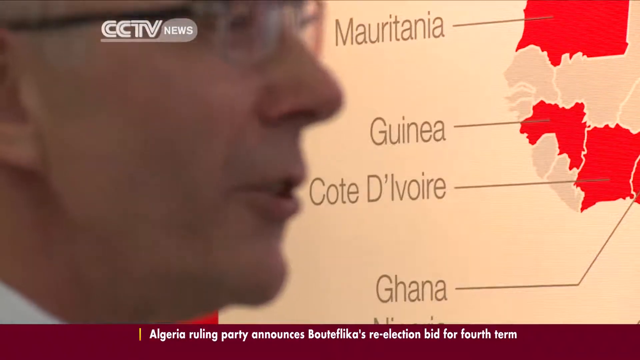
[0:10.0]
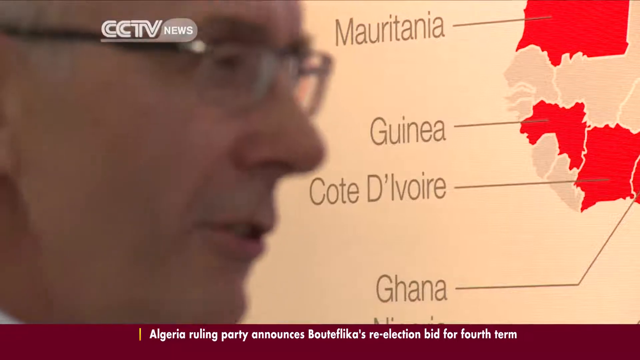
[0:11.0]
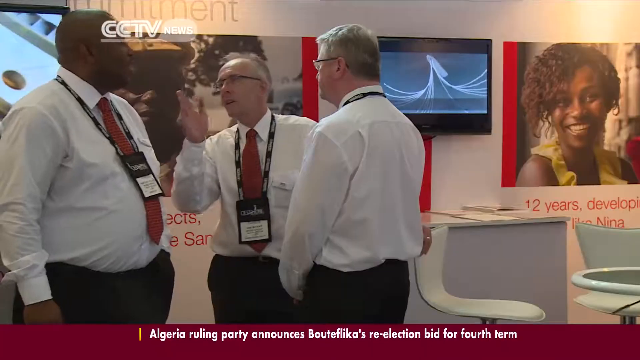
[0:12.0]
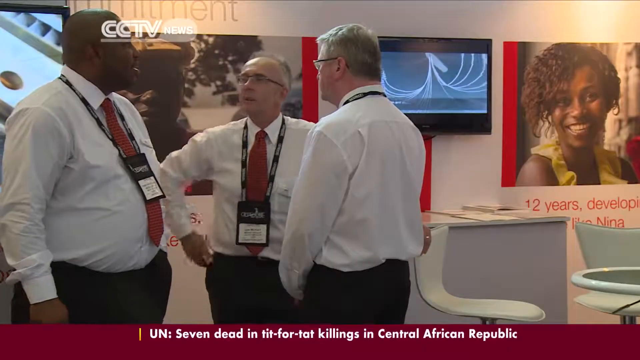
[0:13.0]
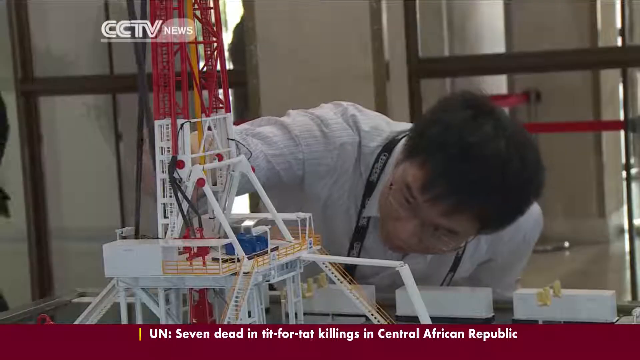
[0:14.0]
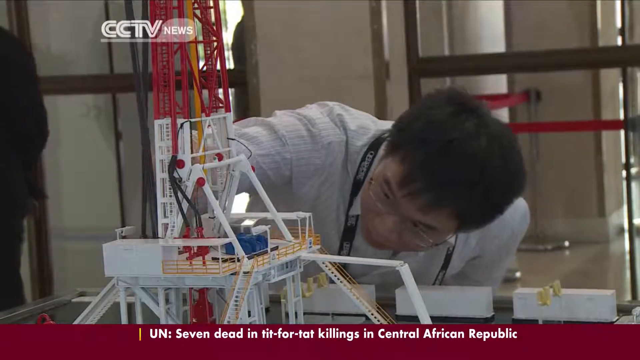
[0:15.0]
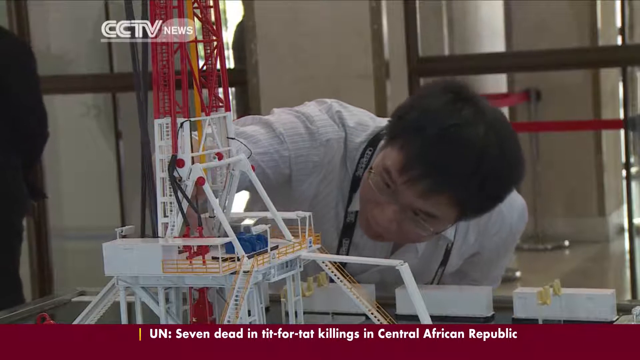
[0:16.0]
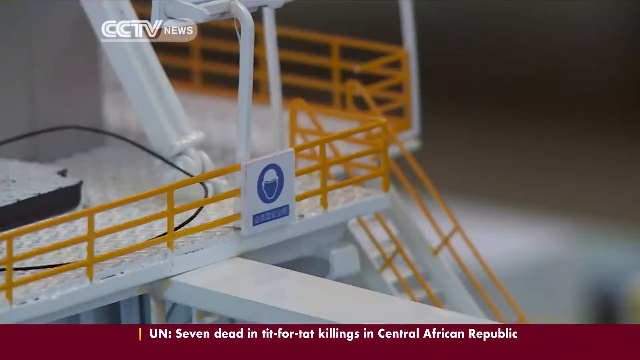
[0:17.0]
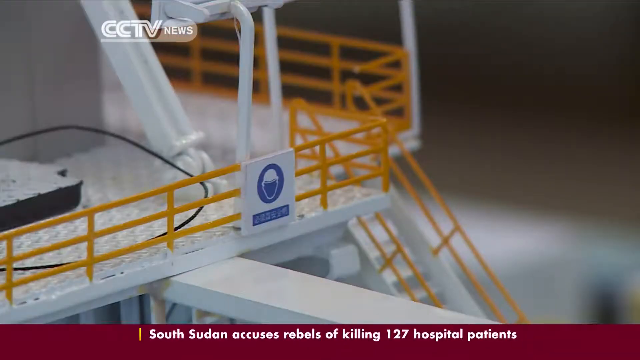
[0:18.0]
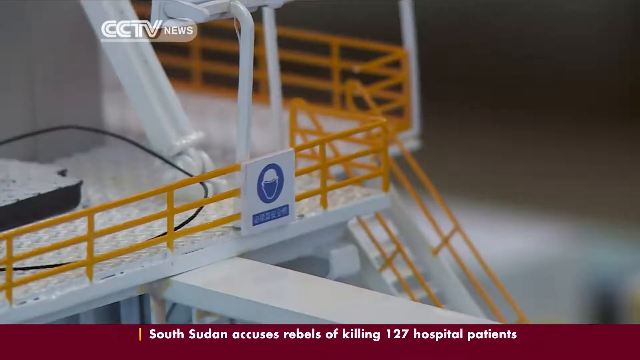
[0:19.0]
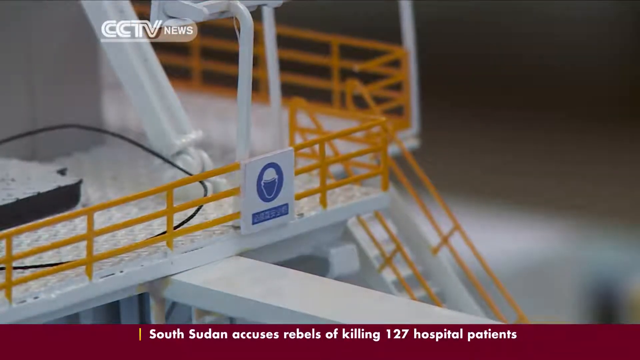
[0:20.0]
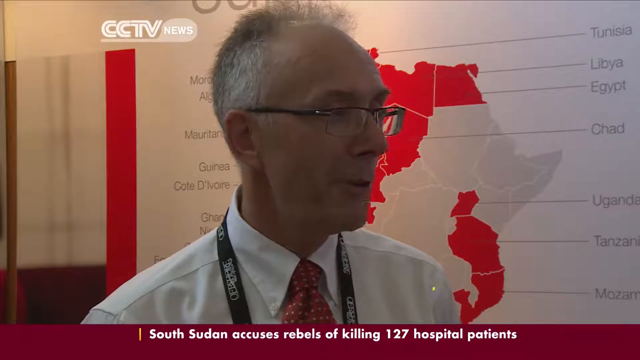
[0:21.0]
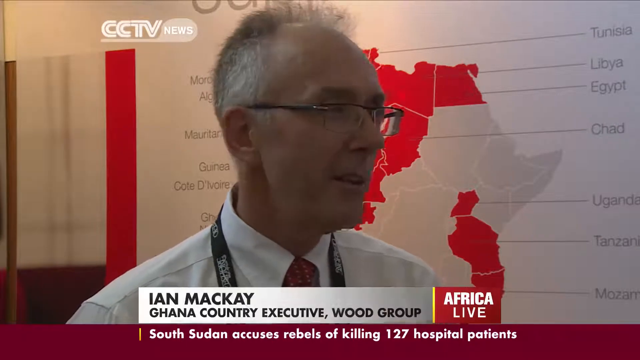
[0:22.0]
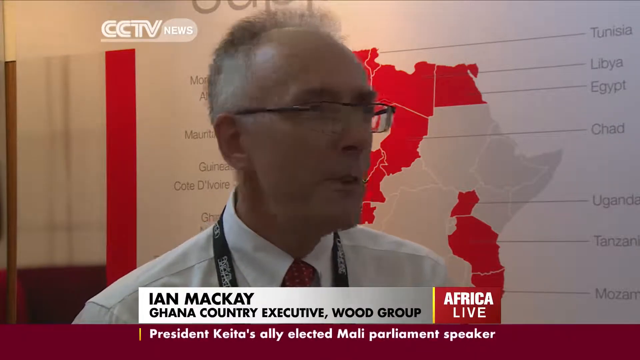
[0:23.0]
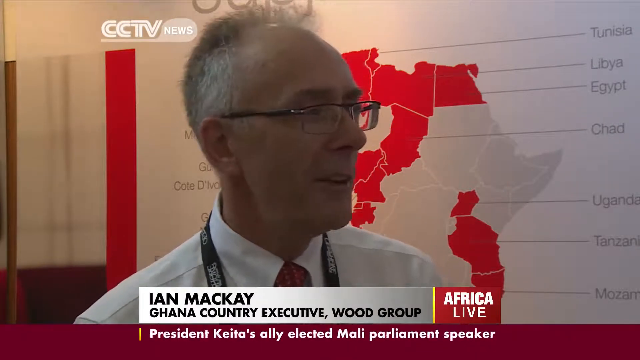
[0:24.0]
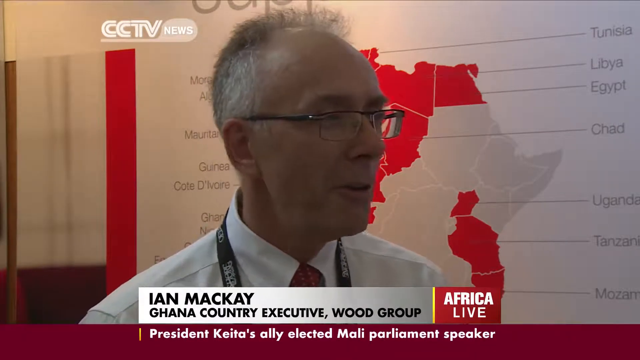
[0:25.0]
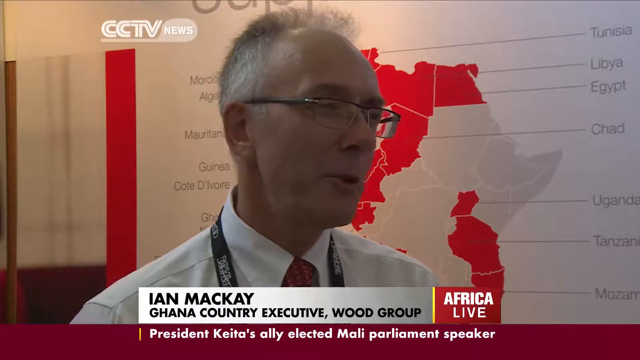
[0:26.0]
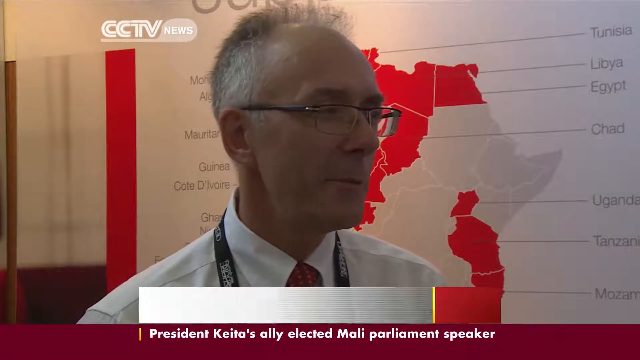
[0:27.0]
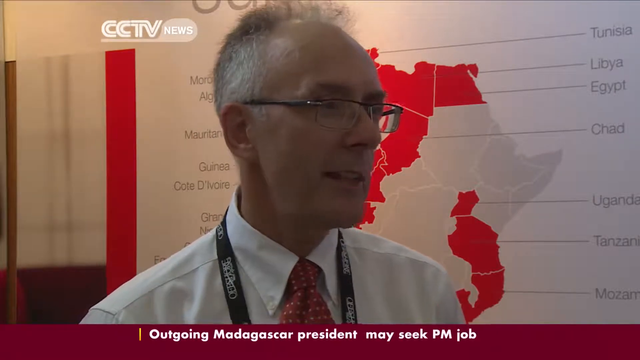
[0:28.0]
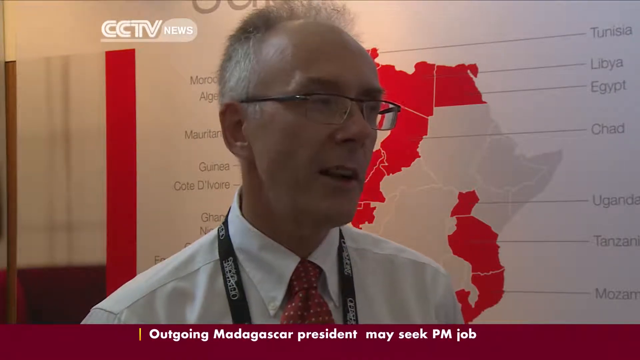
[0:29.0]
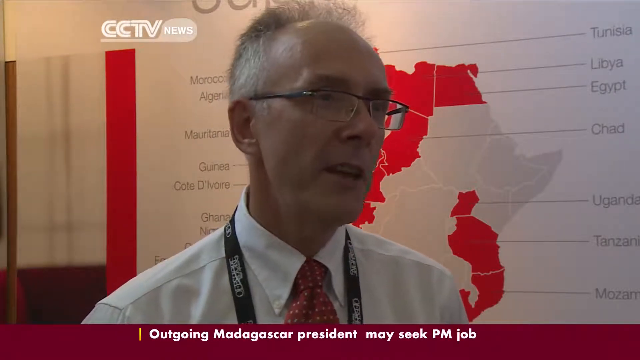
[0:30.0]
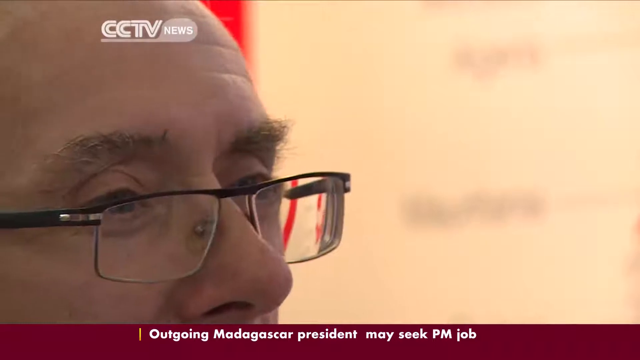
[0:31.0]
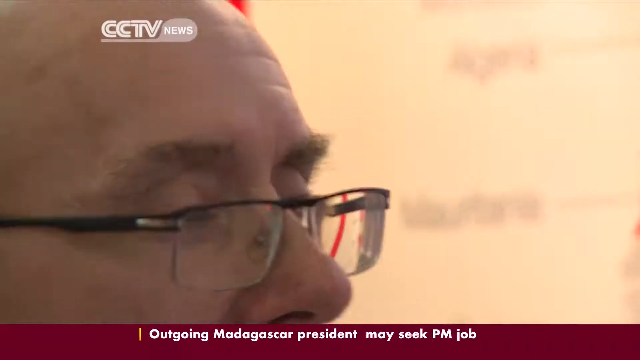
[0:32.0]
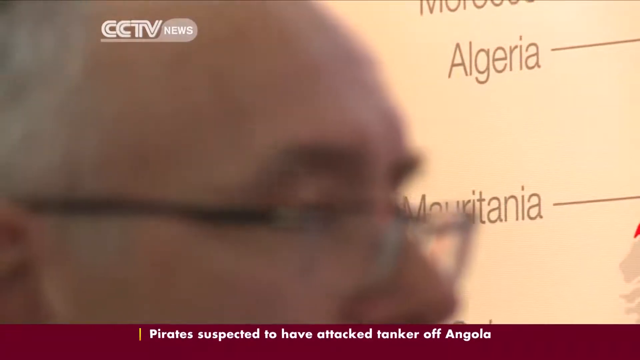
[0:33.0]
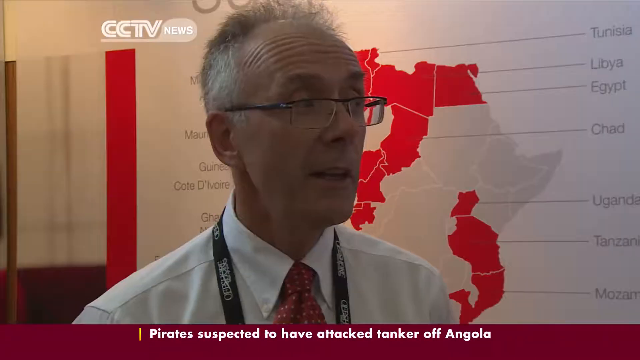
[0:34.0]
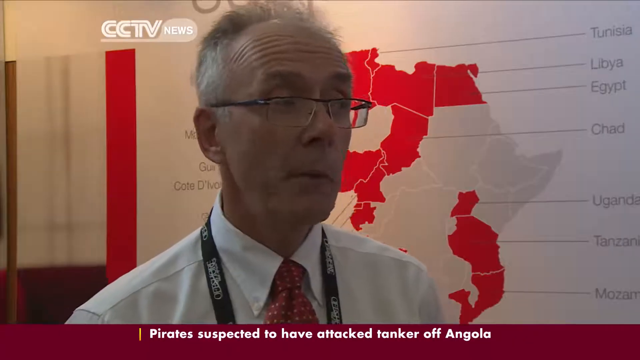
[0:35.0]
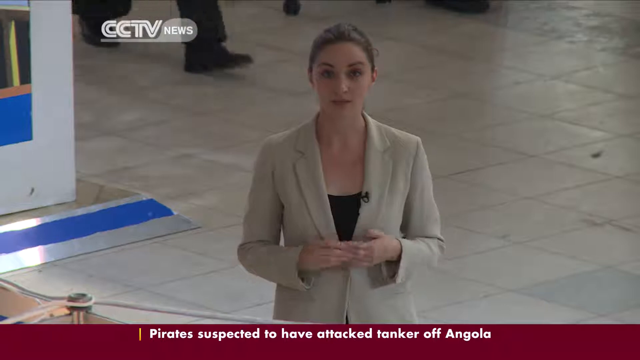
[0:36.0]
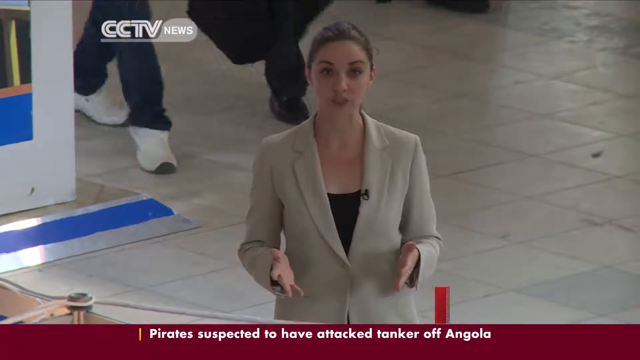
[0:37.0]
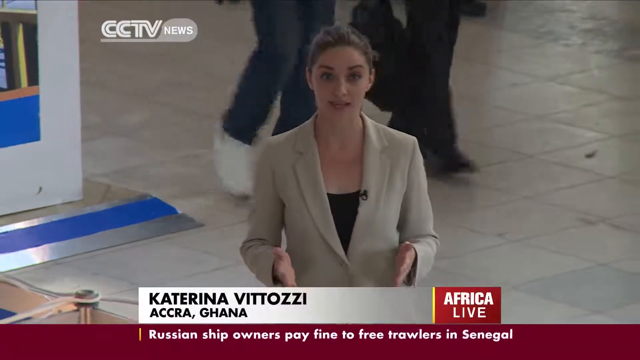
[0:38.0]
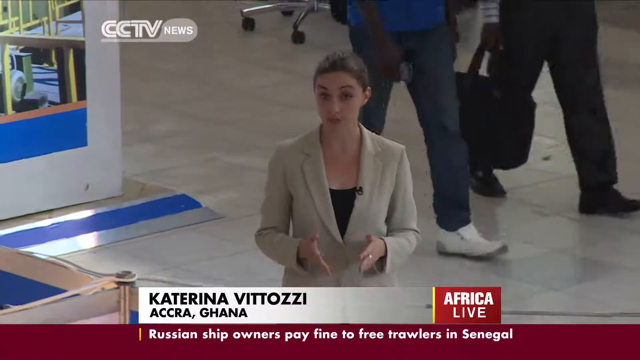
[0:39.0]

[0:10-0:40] The words "CCTV News" appear in the top left corner, naming the broadcasting channel. A heading reads "Welcome to offshore" in white writing on a grey background. At the bottom, the caption of the news report reads "18th annual West Africa offshore oil conference," and next to it a red sign with white writing reads "Africa Live." Many people work in their offices, which seem to be situated in the middle of a mall. The offices are very small, and there are not a lot of people; most of them seem to be on the left-hand side. No animals are present. It seems to be a news report about the offshore oil conference.